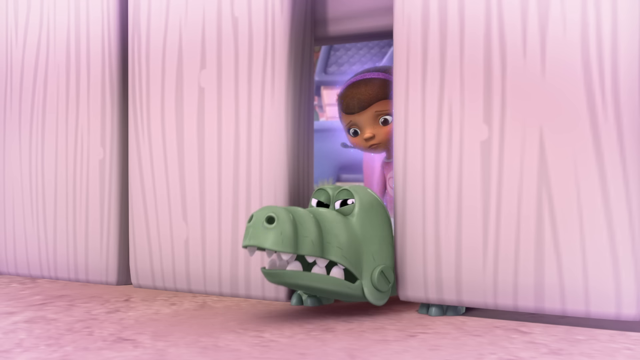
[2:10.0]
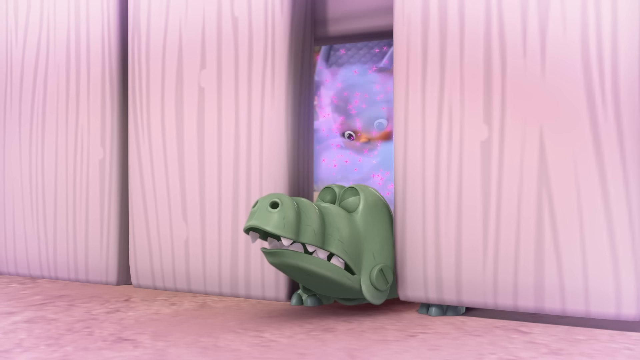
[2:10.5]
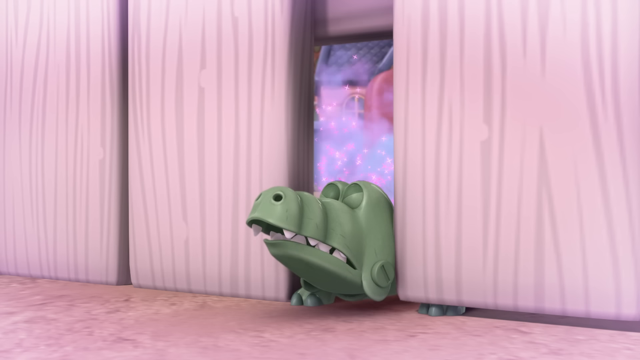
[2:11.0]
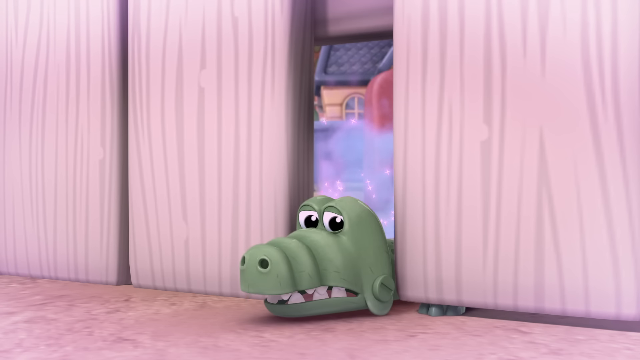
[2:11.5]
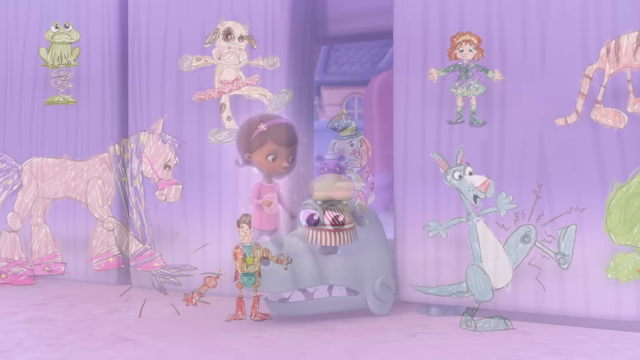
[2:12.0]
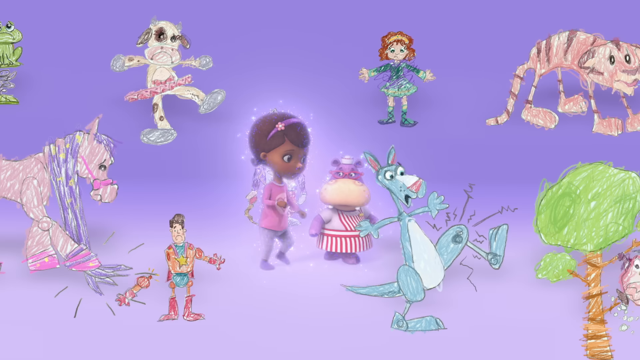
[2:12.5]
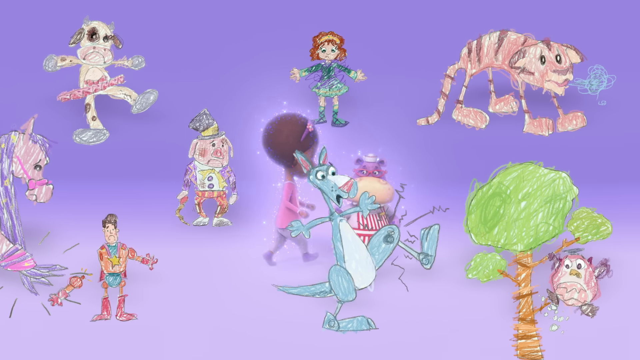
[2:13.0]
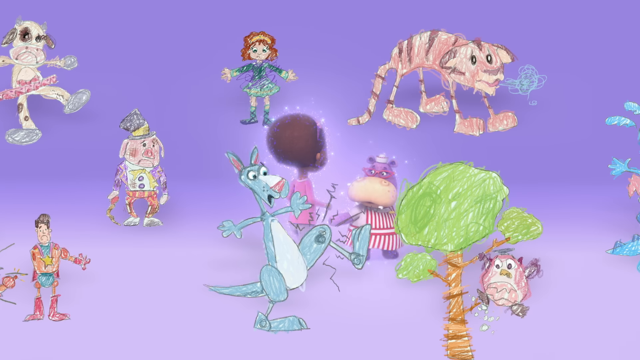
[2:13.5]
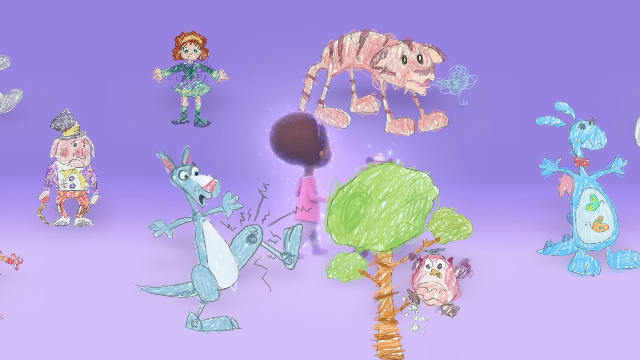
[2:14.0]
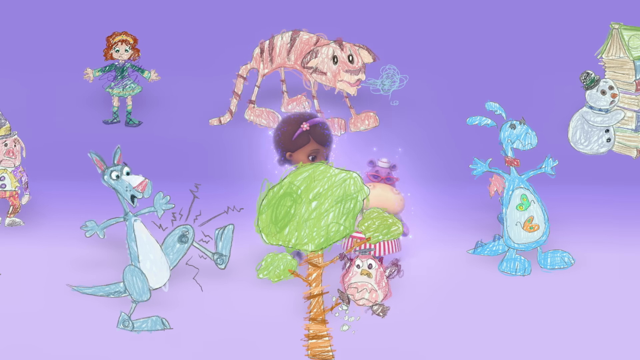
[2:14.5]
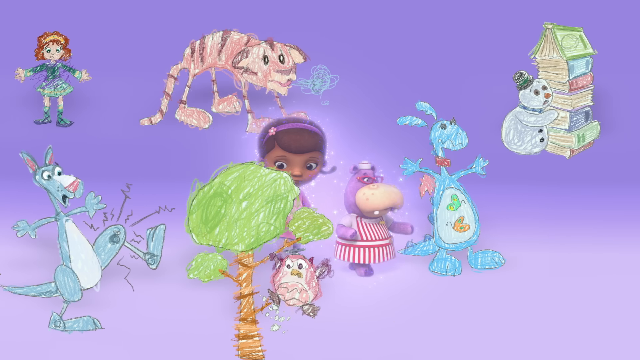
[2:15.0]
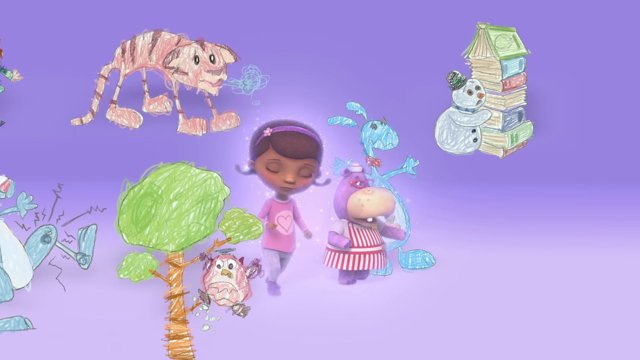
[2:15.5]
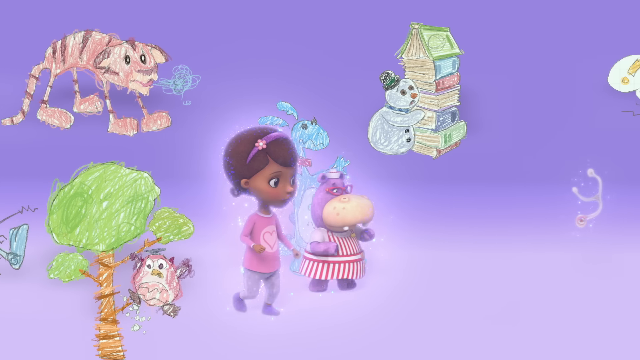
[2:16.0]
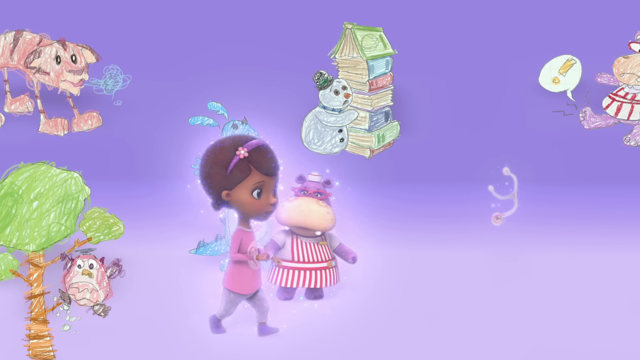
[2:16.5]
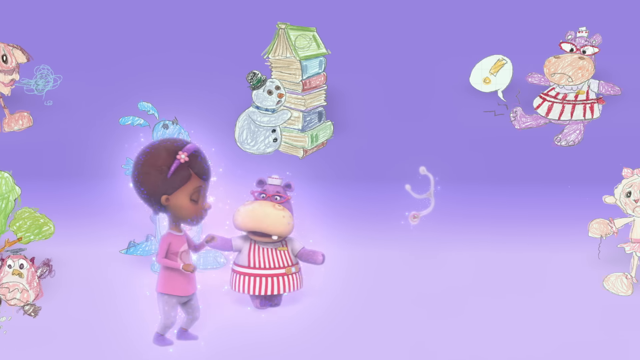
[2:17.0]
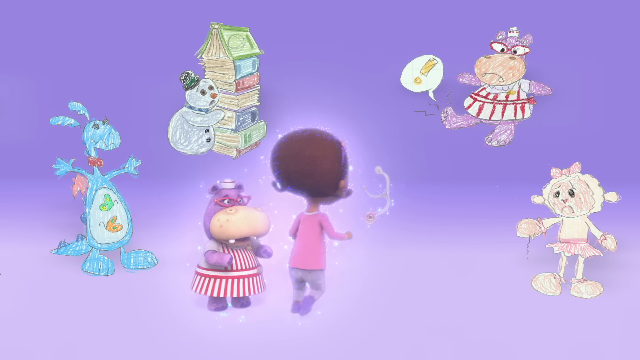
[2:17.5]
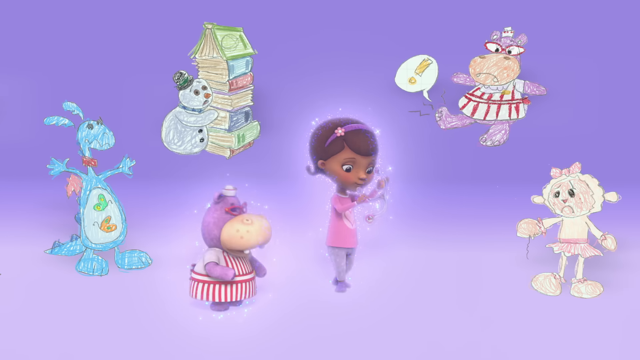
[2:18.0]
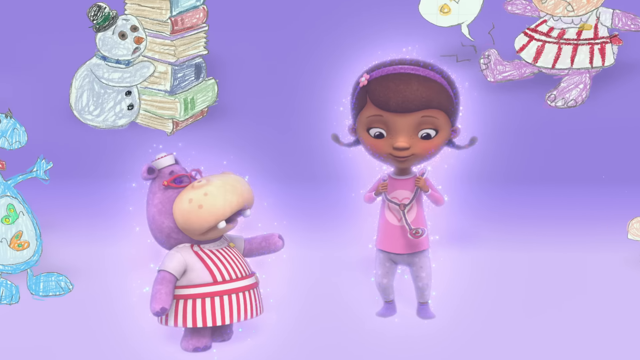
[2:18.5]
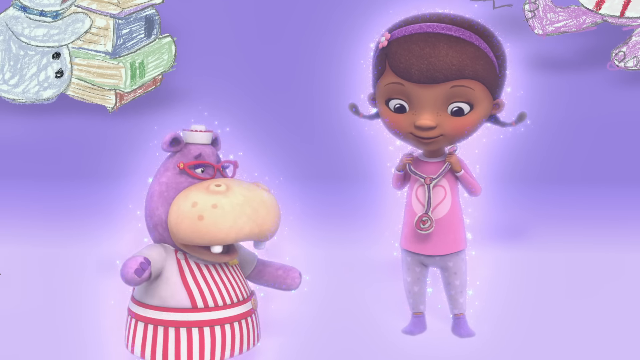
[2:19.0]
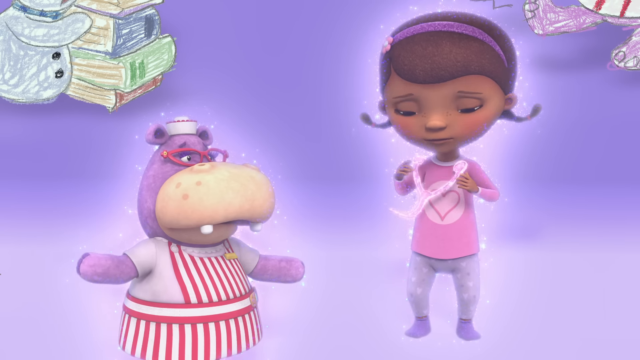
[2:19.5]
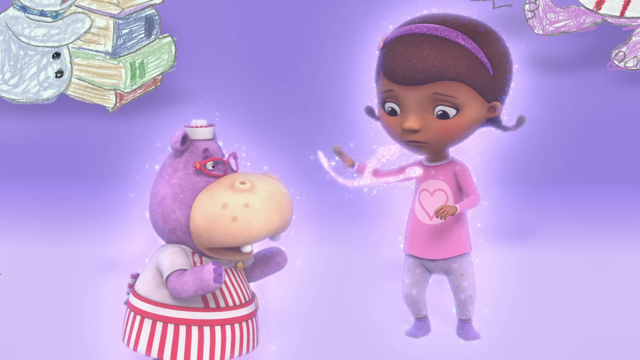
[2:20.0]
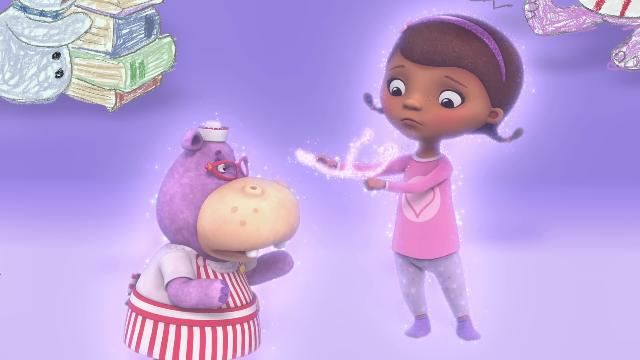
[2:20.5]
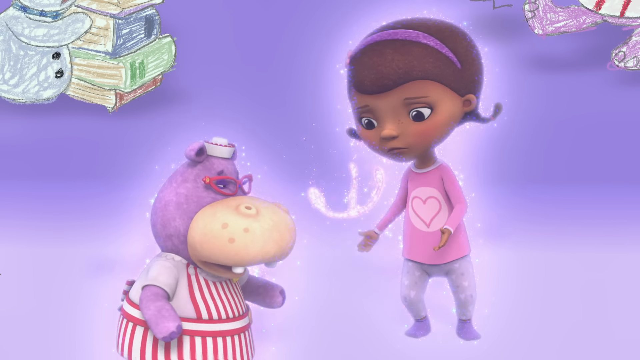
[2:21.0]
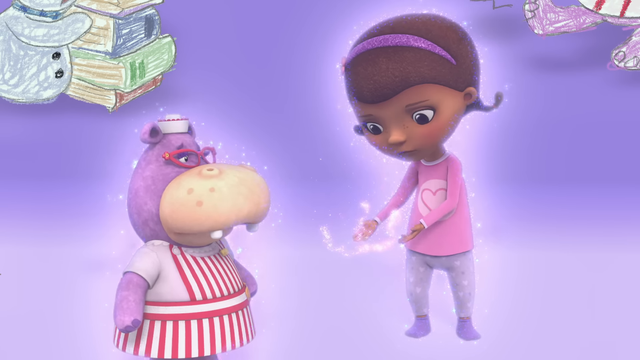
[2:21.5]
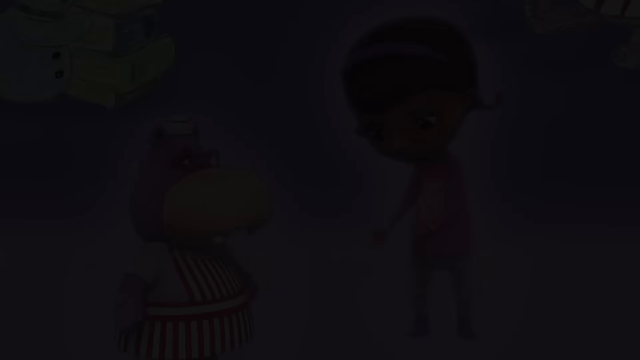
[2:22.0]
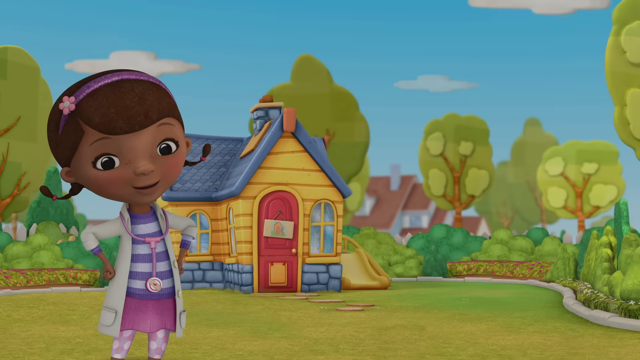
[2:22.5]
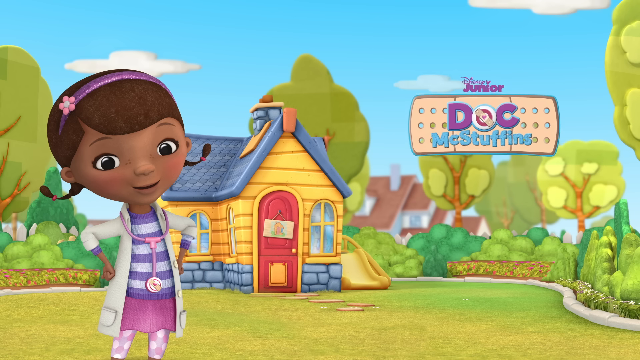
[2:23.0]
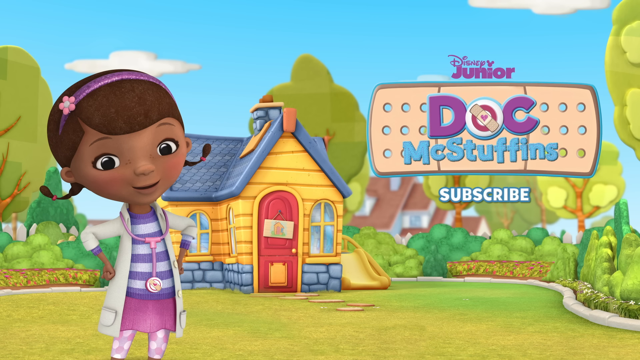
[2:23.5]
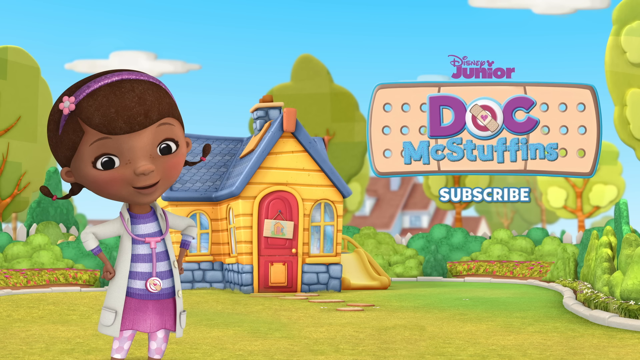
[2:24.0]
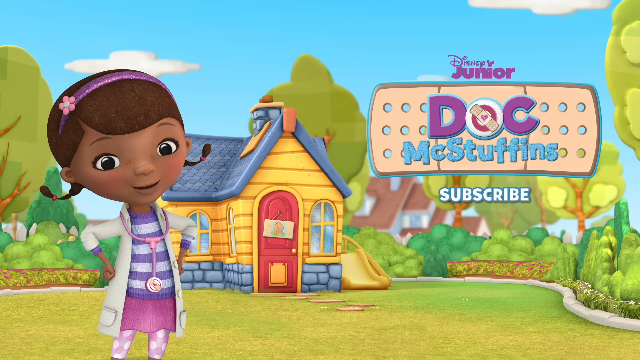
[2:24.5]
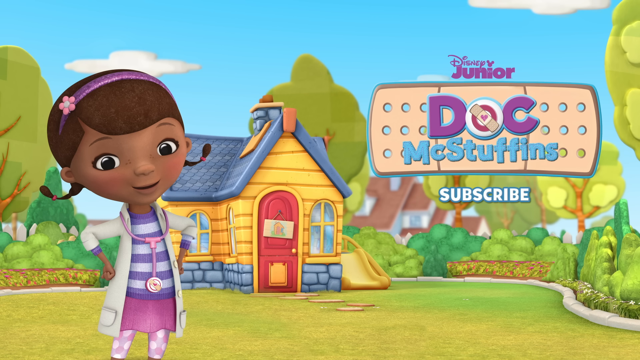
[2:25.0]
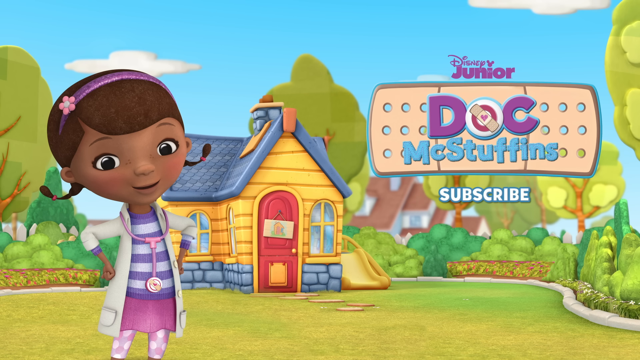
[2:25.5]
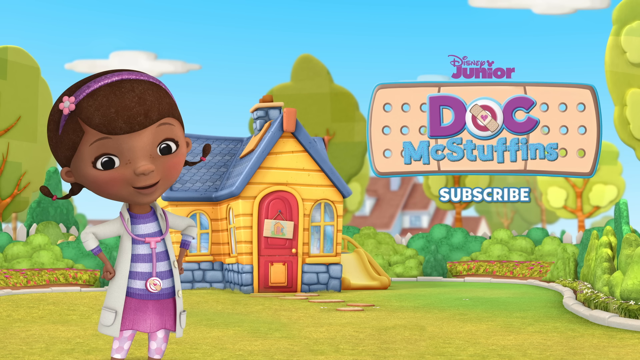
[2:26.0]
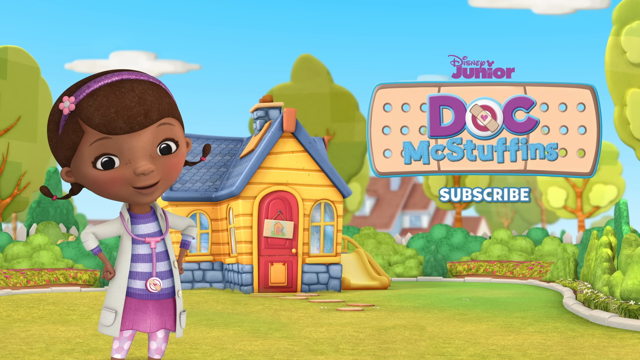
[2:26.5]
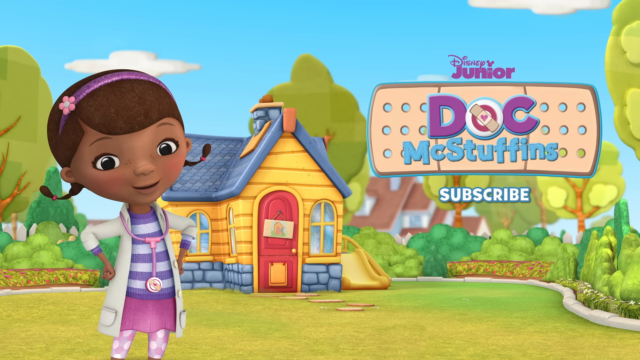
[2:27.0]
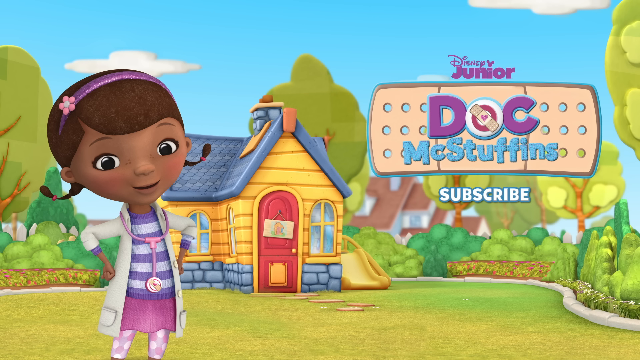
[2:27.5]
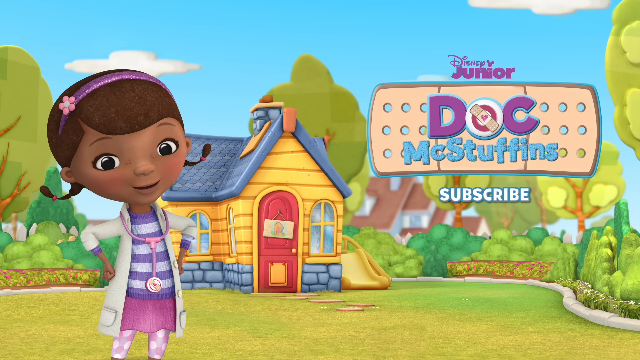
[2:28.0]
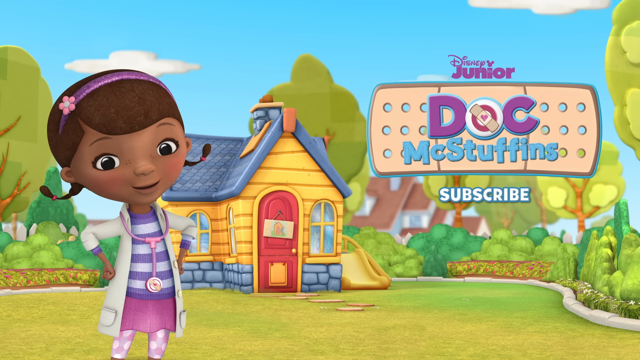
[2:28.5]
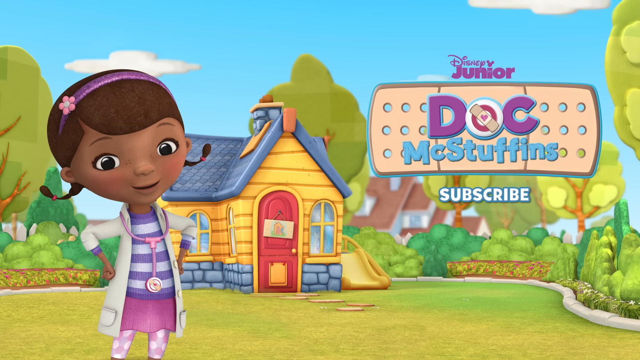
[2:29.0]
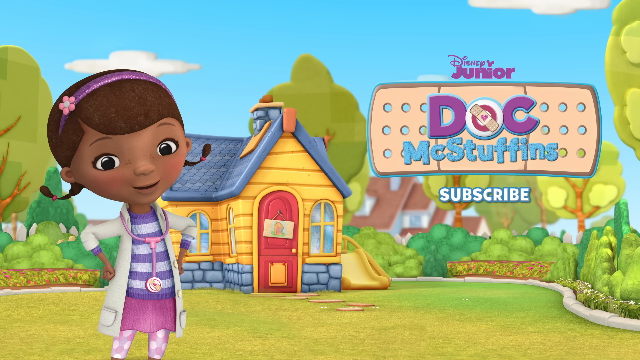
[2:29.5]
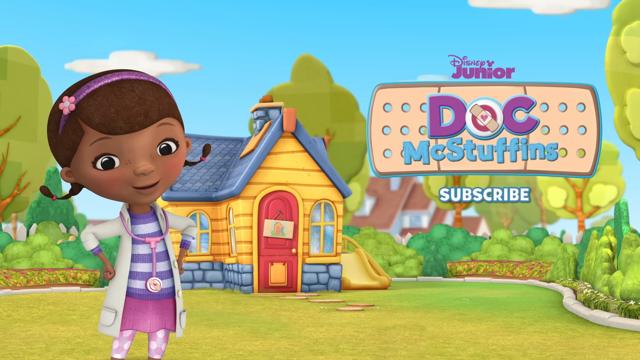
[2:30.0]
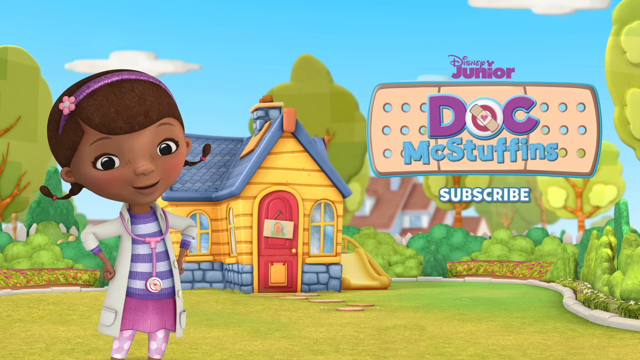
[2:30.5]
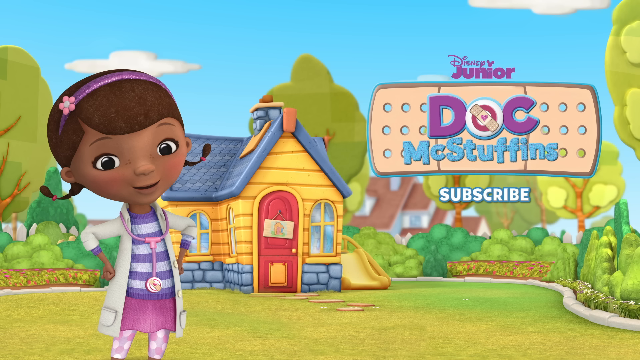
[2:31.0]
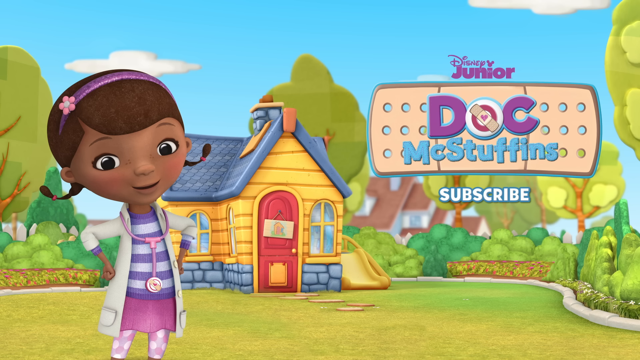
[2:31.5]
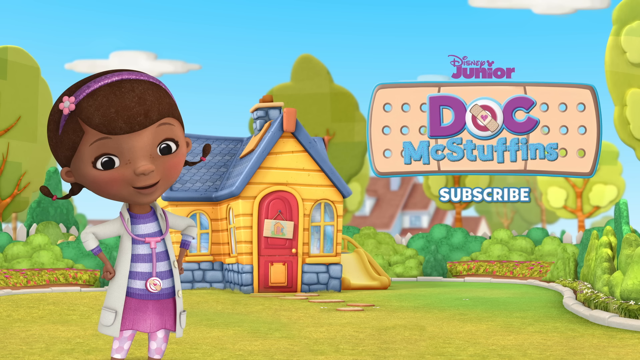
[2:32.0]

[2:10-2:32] A green hippo appears that looks more like the Hungry Hungry Hippo toy from the 1980s, with black eyes and white teeth. The little girl is behind it, with a wooden wall and a little bit of purple-blue in the background behind her; she wears pinkish clothes and has brown hair and a pink-blue hair ribbon. This appears to be the little girl's dream sequence: every time smoke appears, she disappears and appears somewhere else. She walks with the hippo again among crayon drawings of a tiger, trees and people, against a blue-purple-white background. As she walks through, there is a snowman by some books made to look like a house, another drawing of the hippo in the red and white outfit and red glasses, and a doll on the right side looking sad. The scene fades to black, and then there is a screen with a lot of colors and the text "Doc McMuffin" and "subscribe". It is probably a Disney animated show. A yellow house with a blue roof and a red door stands under blue skies with a couple of clouds that look like Chevrolet symbols, with green trees and green-yellow grass. The walls at the bottom of the house are a purple-blue brick color. The little girl, who looks to be dark-skinned, is looking at the camera with her purple hair ribbon, now in different clothes: a pink stethoscope, a purple and white shirt, a lab coat and a white skirt.